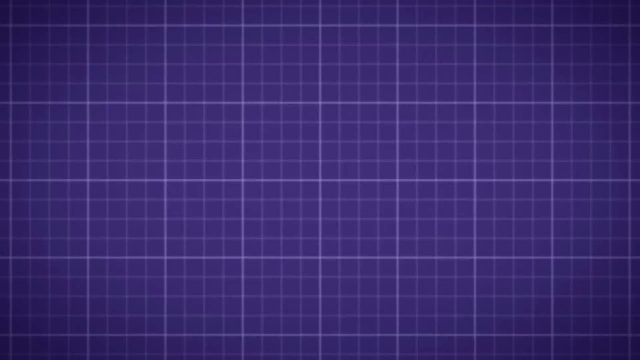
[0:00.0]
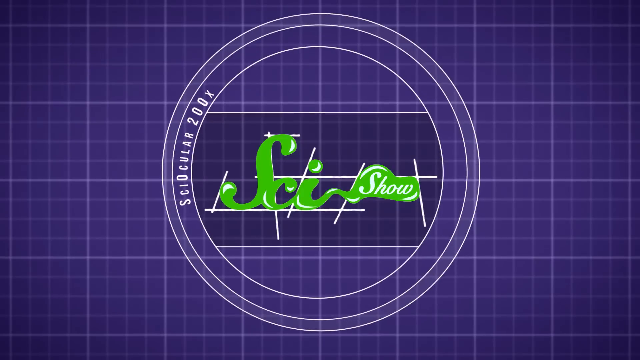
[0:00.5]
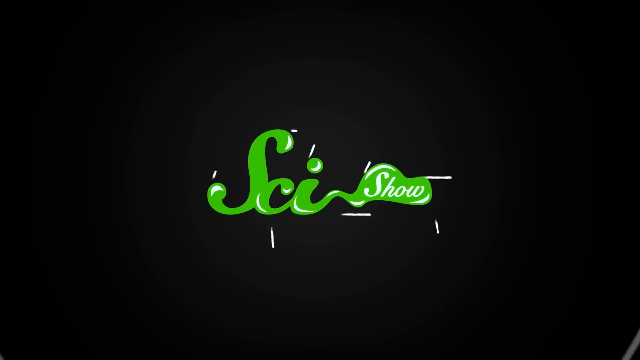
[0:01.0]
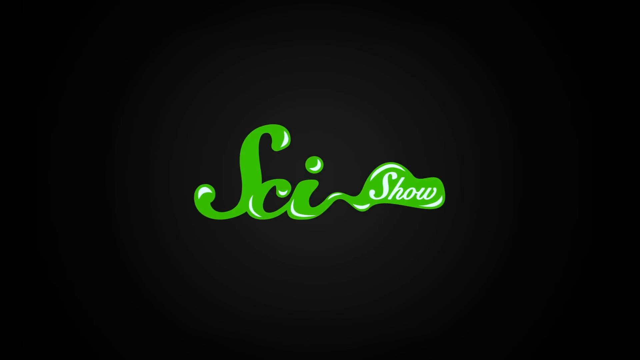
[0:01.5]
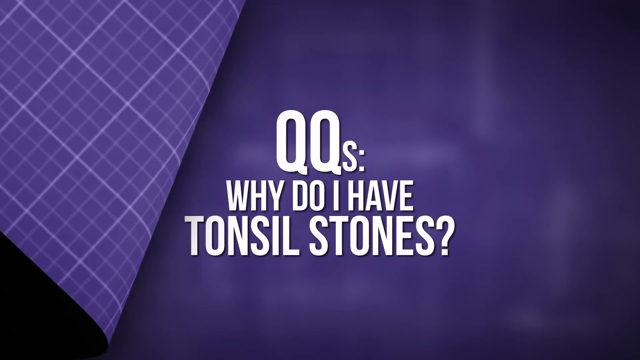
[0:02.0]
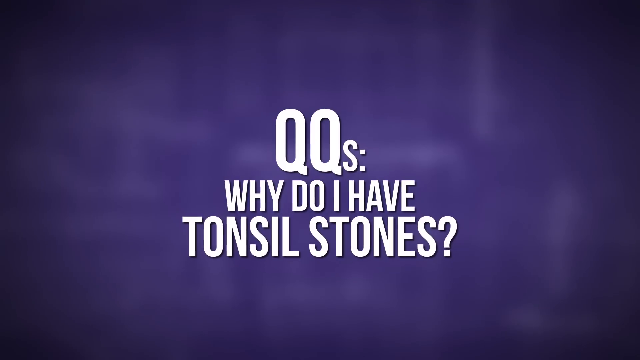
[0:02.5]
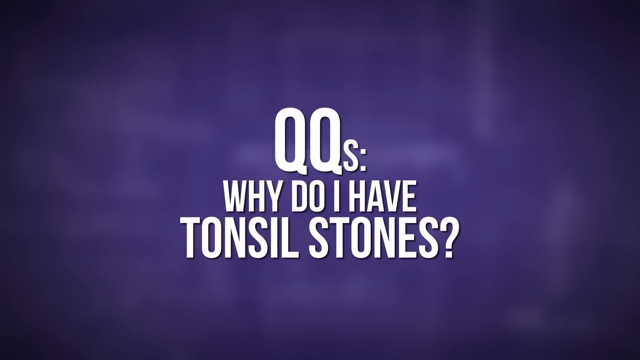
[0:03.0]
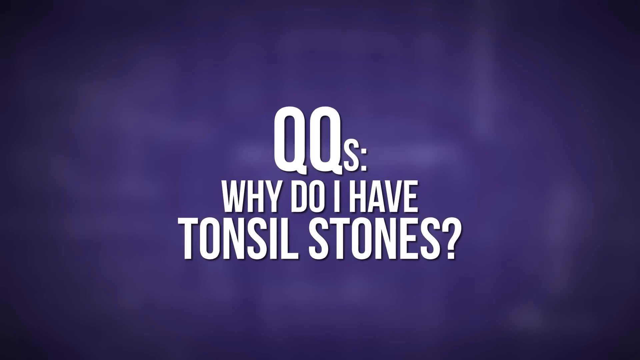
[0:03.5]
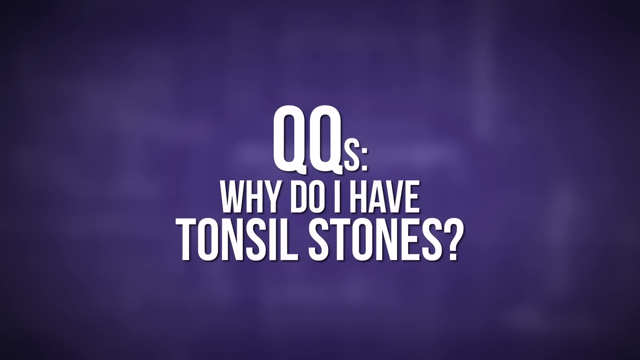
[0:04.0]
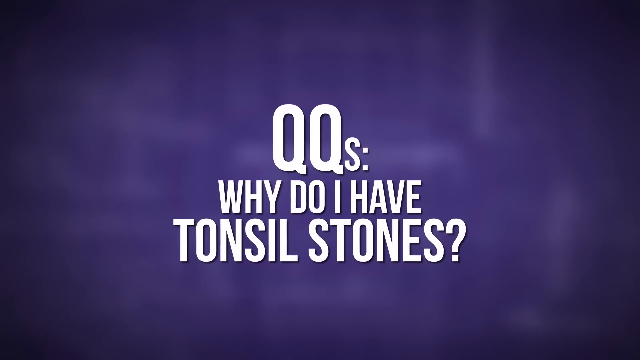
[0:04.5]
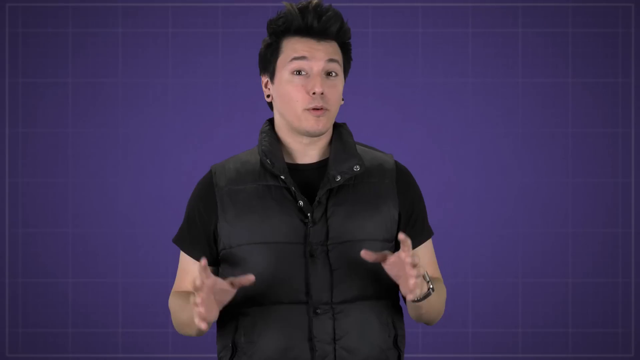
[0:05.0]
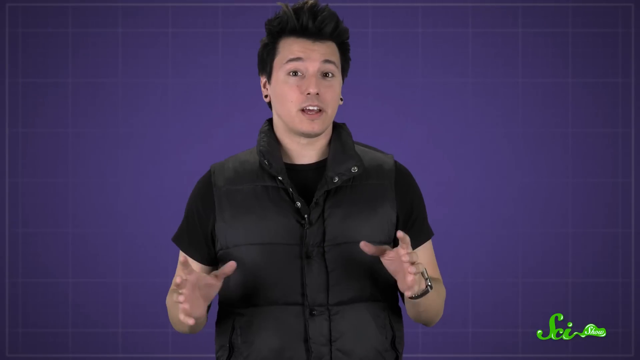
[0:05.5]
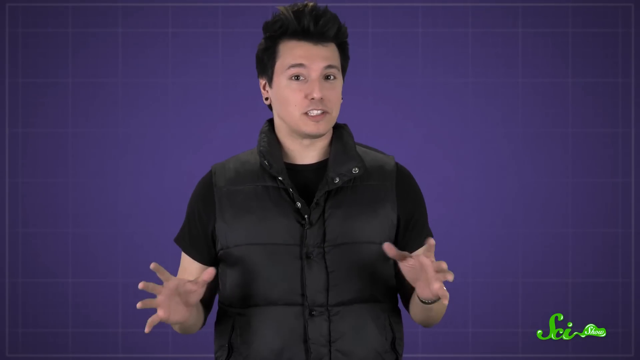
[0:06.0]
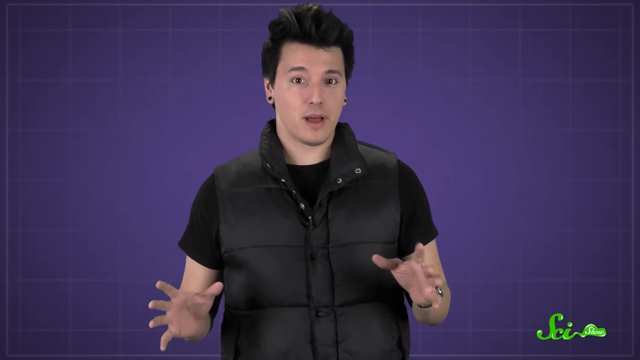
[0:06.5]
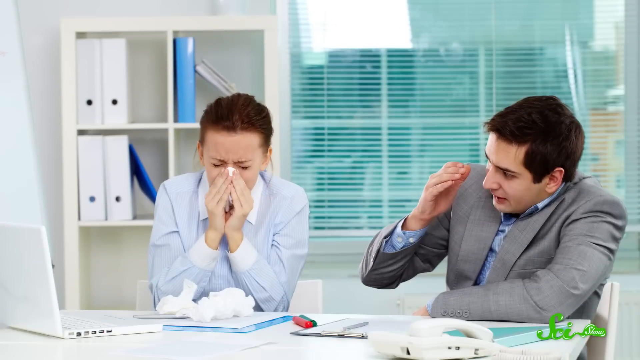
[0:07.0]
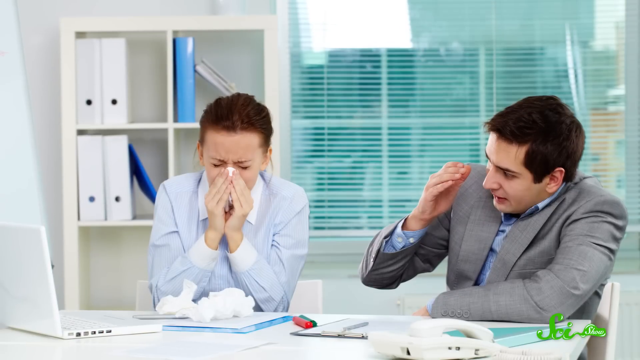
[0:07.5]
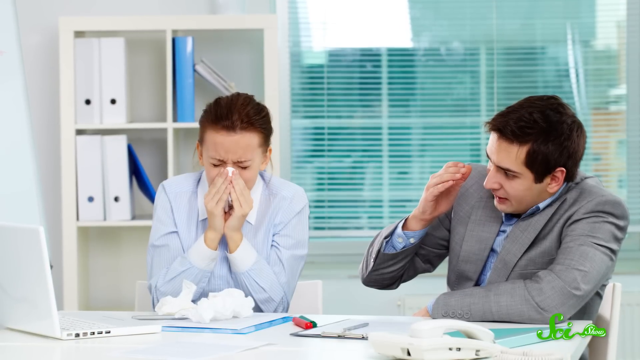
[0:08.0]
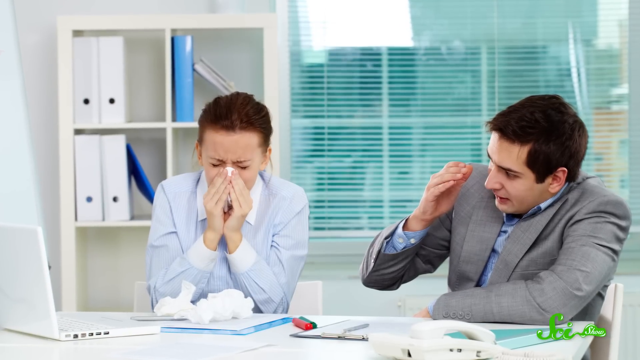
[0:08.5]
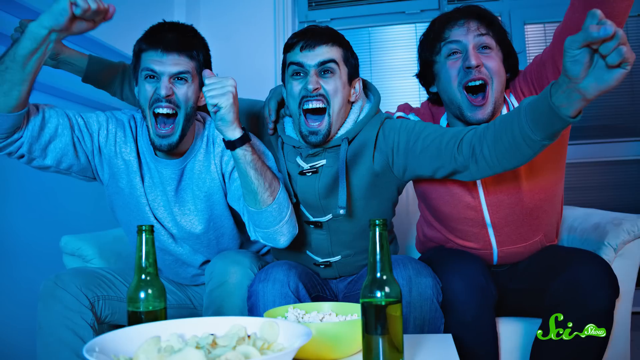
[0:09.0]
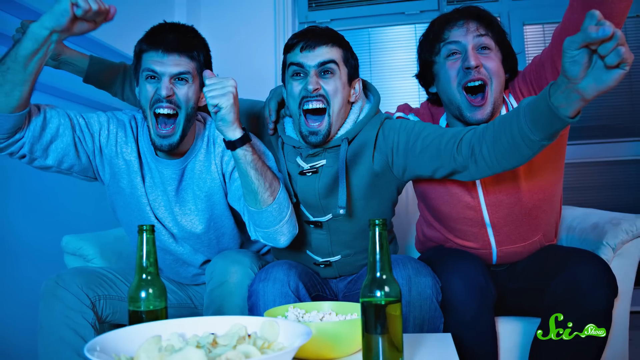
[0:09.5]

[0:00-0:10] The word "SciShow" appears at the very beginning. A man is shown along with images of many different people who look very excited and enthusiastic in the background. A distinctive logo appears in the bottom right-hand corner of the screen.